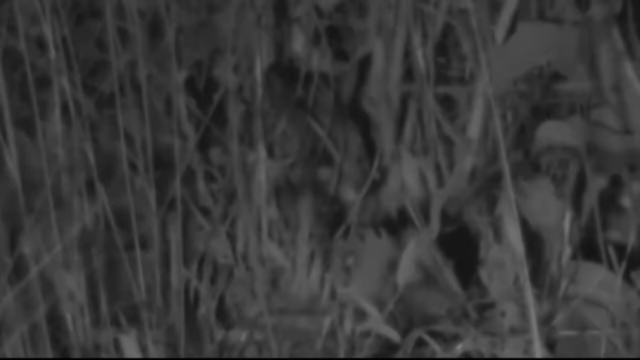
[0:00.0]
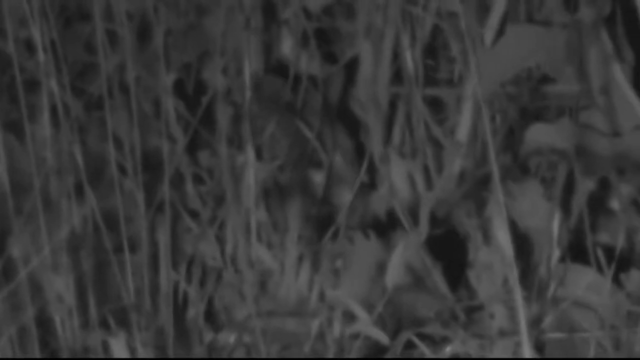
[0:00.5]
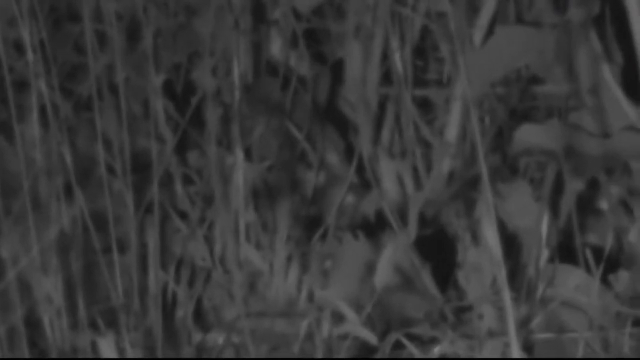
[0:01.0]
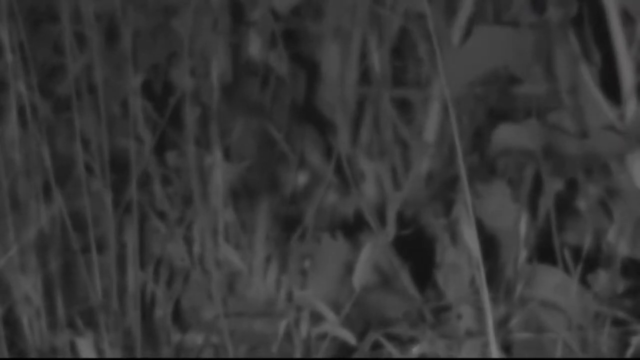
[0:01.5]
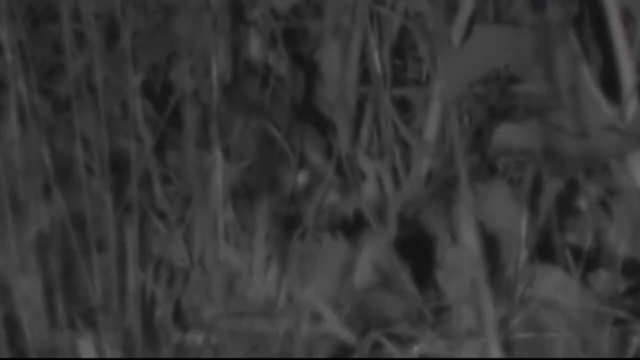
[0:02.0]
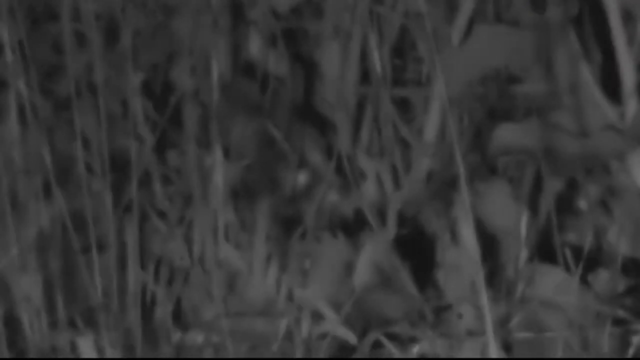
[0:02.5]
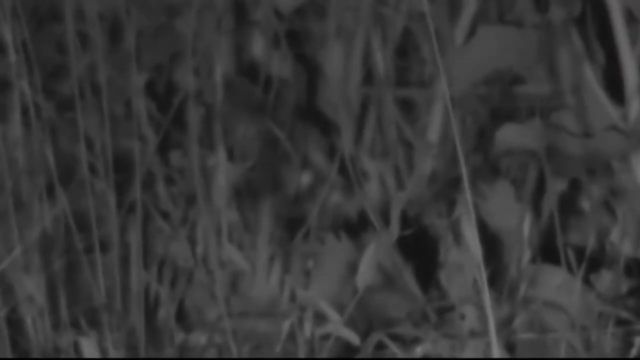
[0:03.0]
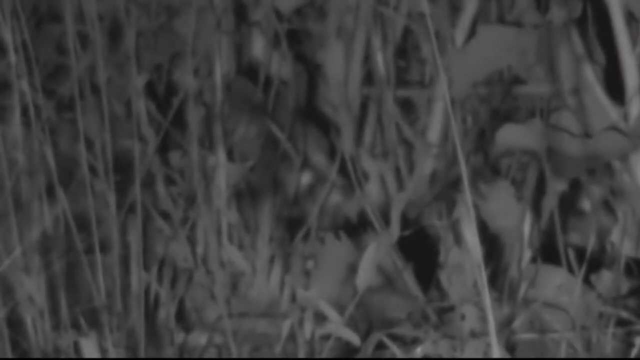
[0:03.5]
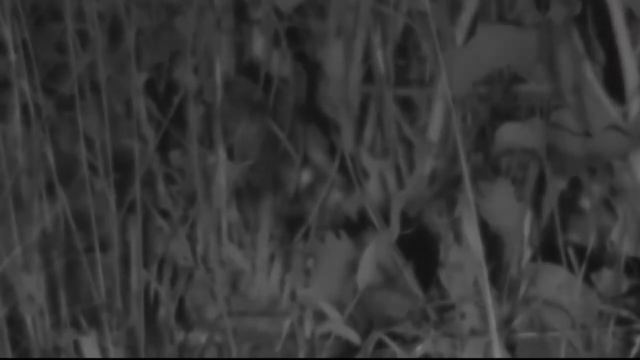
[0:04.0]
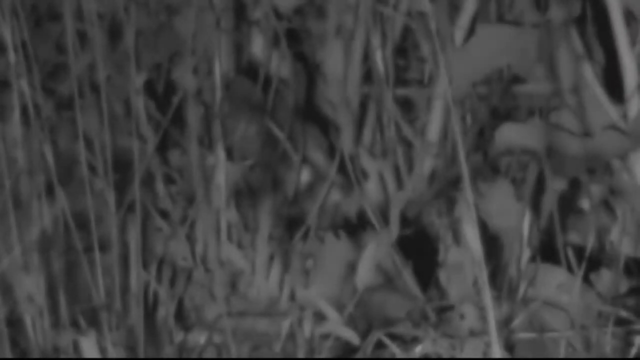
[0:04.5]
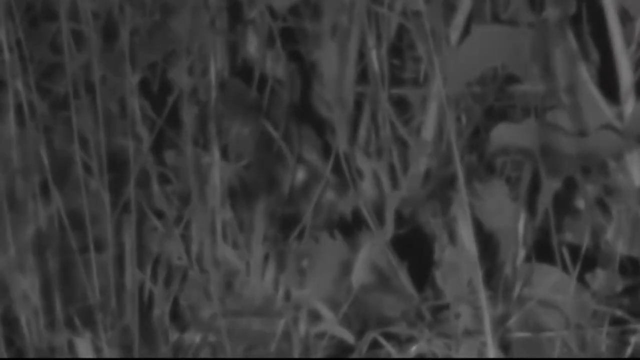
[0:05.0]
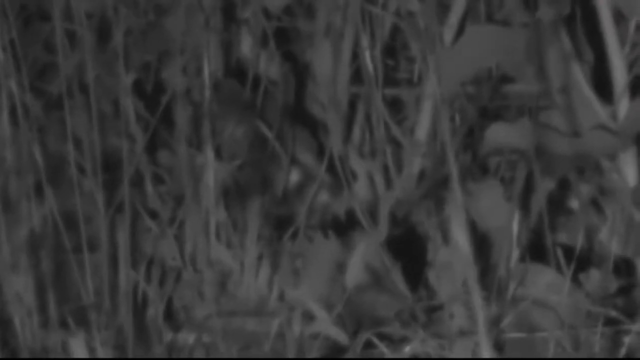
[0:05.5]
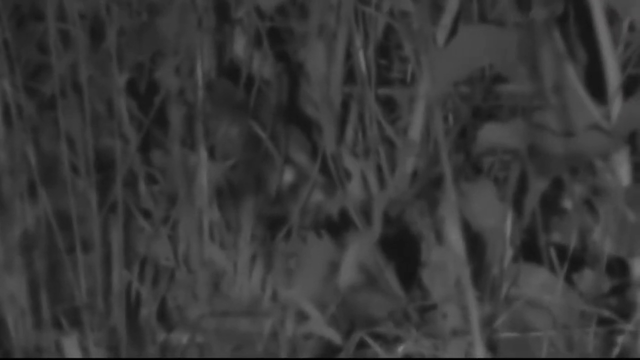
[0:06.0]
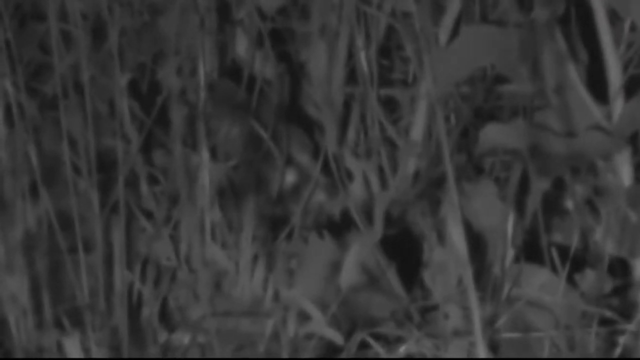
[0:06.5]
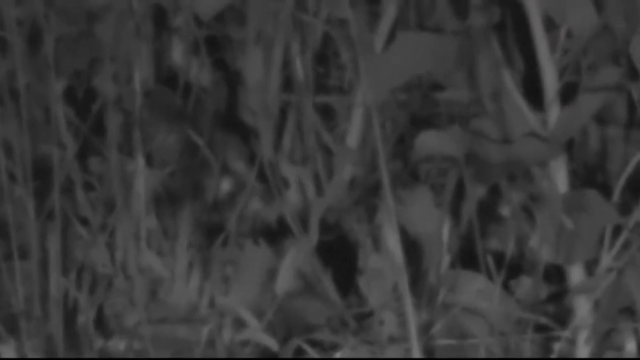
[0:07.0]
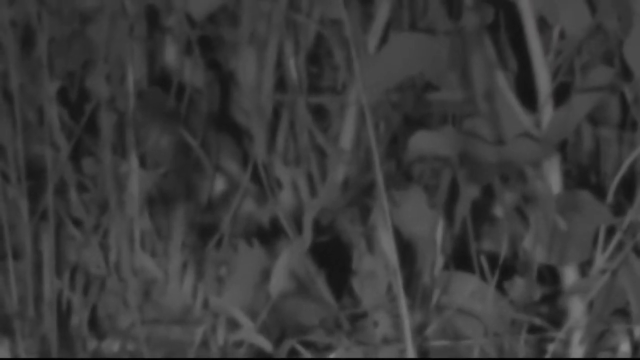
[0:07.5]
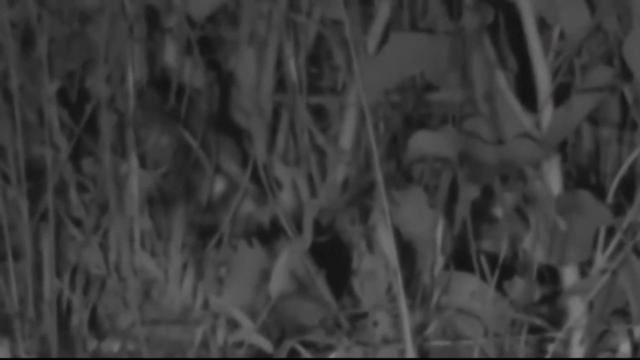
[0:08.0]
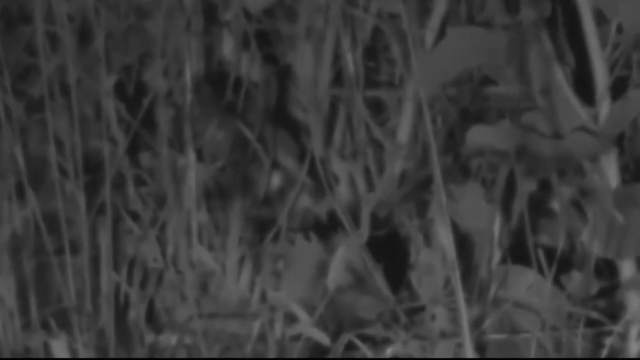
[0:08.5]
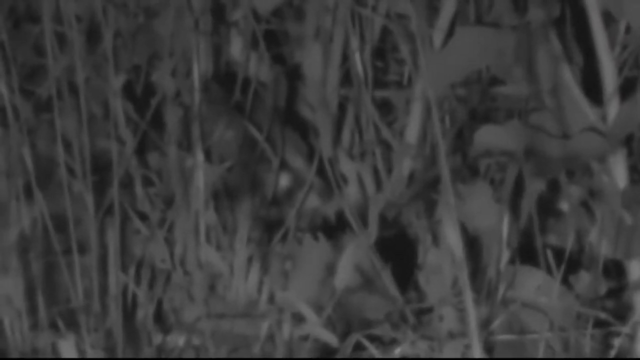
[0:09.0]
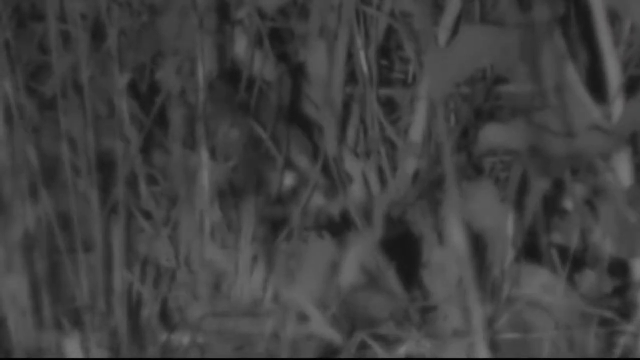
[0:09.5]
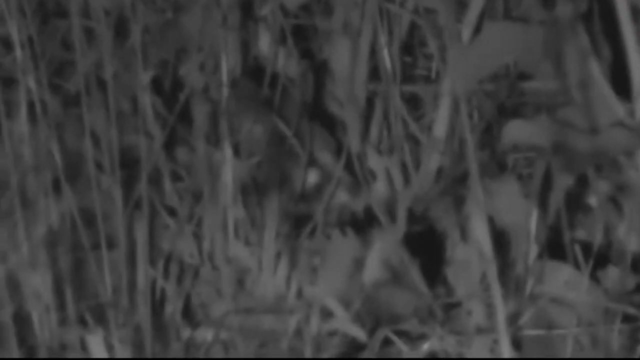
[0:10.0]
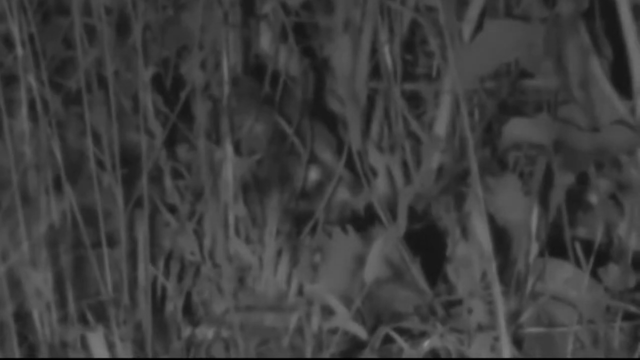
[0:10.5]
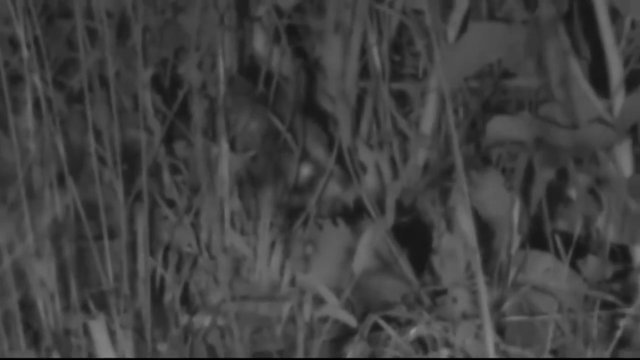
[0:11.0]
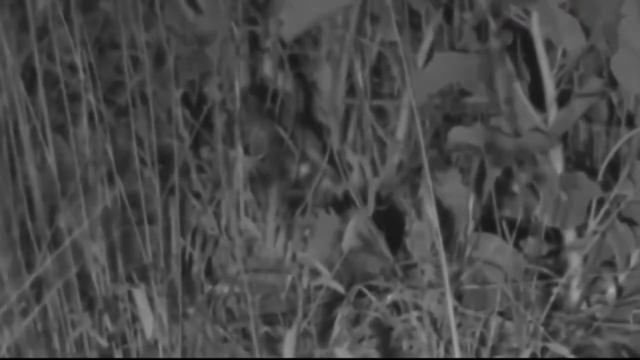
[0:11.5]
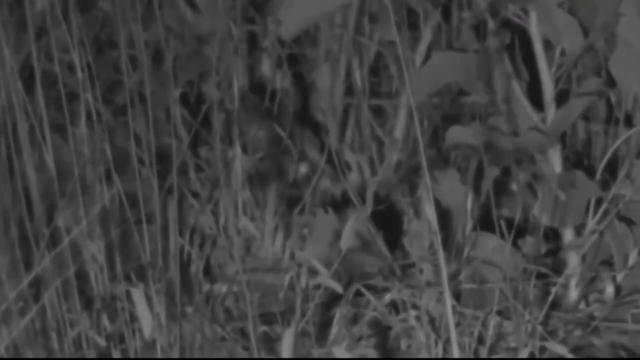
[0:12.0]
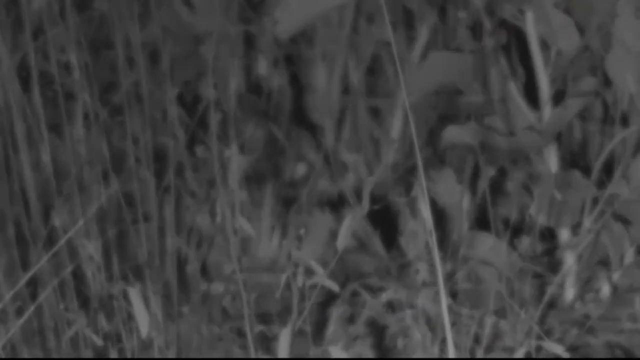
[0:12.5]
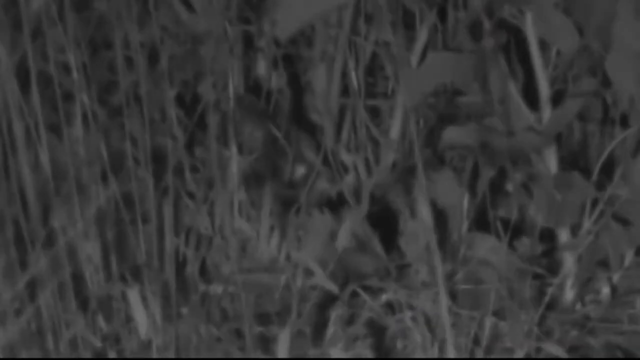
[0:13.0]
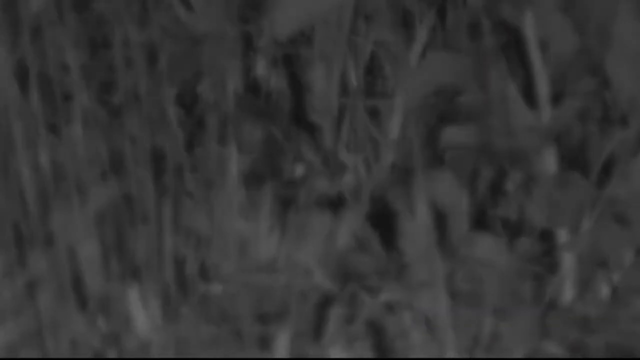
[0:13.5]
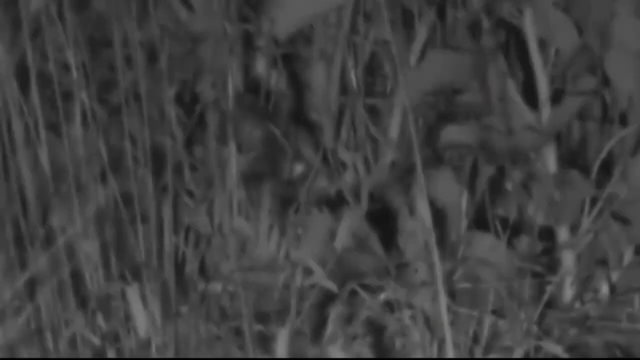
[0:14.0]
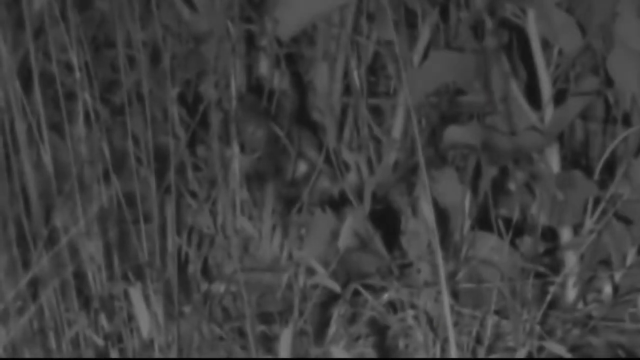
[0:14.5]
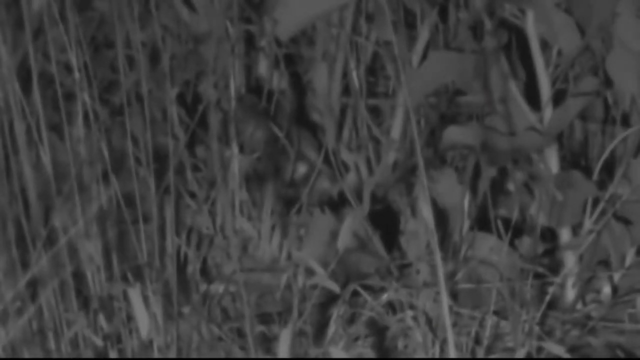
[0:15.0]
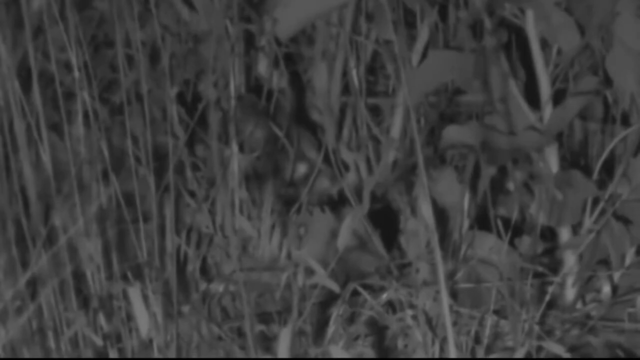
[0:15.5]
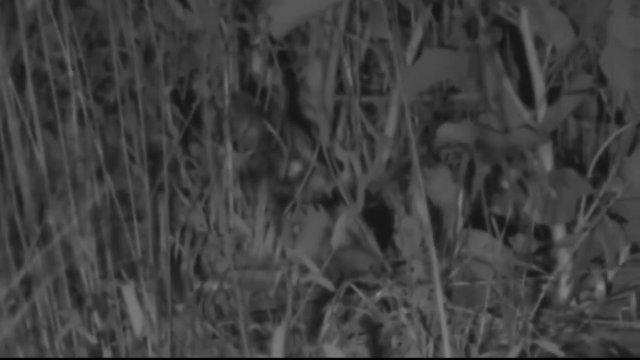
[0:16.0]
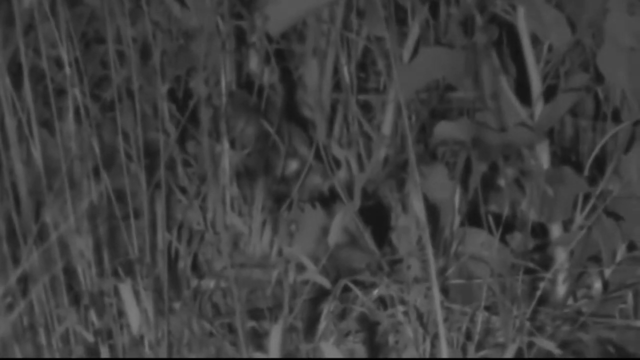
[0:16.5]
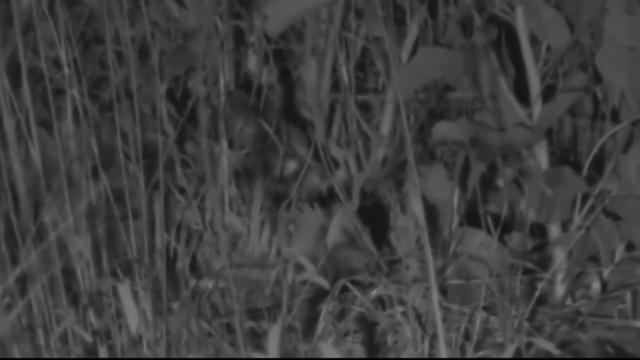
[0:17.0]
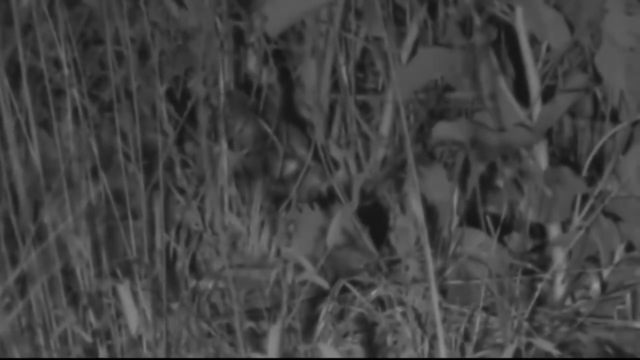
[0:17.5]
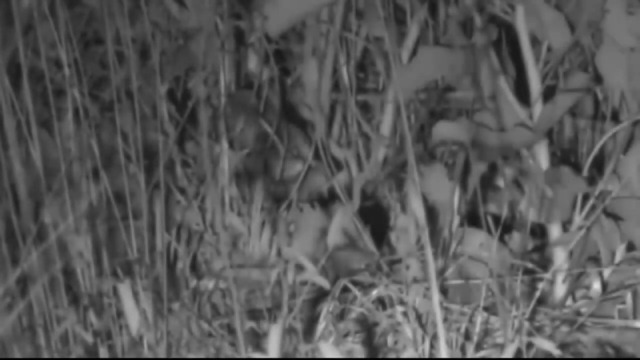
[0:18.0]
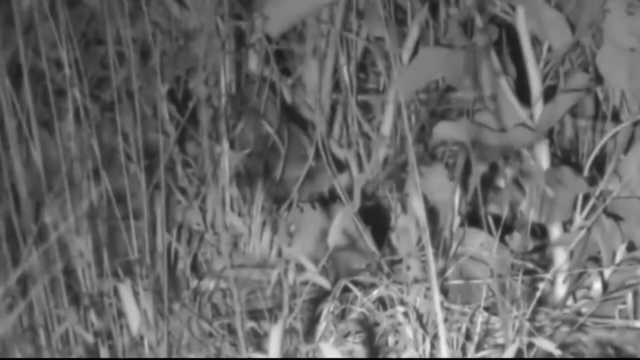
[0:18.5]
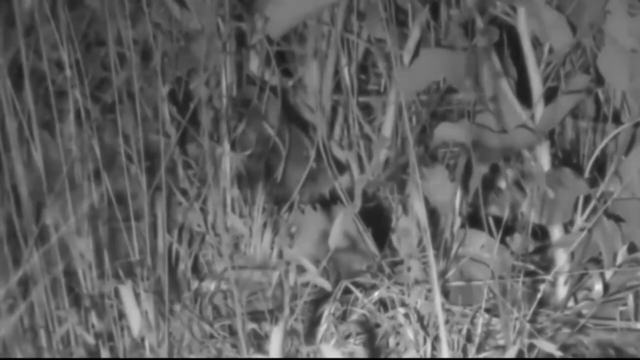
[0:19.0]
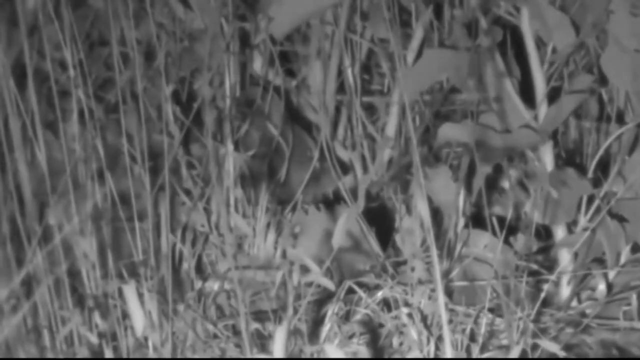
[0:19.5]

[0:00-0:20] The video opens on the bottom of a grassy field with some kind of plants growing there. The image then turns black and white. On the right side of the screen there appears to be a dog or some sort of face, a little face that looks kind of like an animal's. The view seems to be from someone lying in the grass, looking through it. Up in the center there is a little movement that comes in and out of focus, and something there looks similar to a dog, maybe a bulldog. The image is not well focused, and some kind of creatures are visible but cannot be identified.